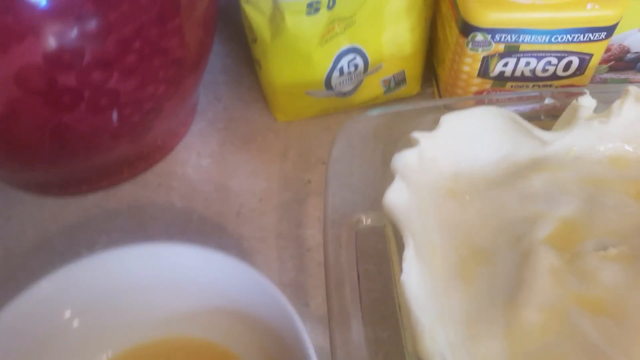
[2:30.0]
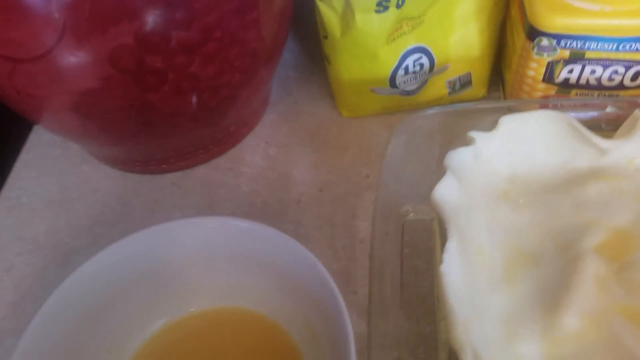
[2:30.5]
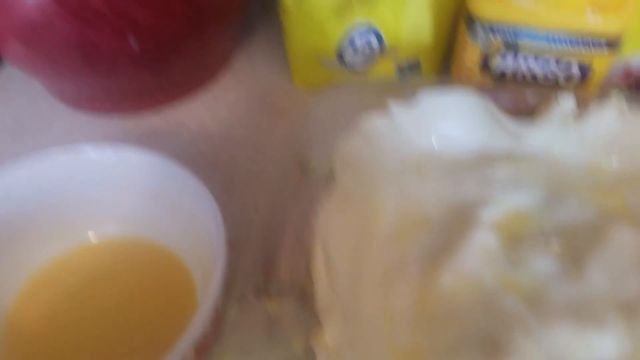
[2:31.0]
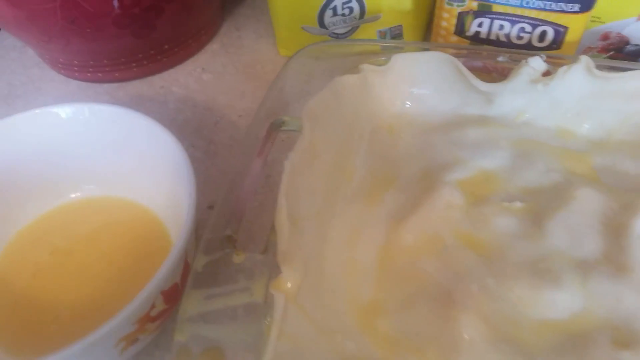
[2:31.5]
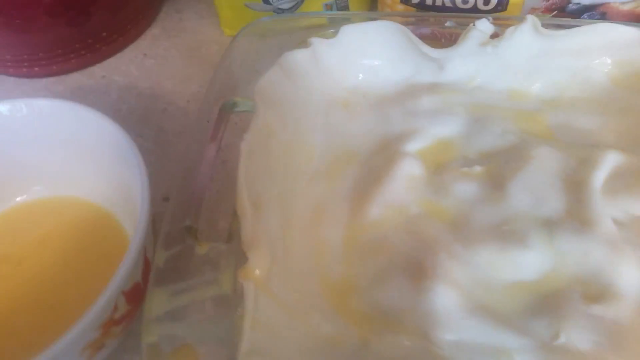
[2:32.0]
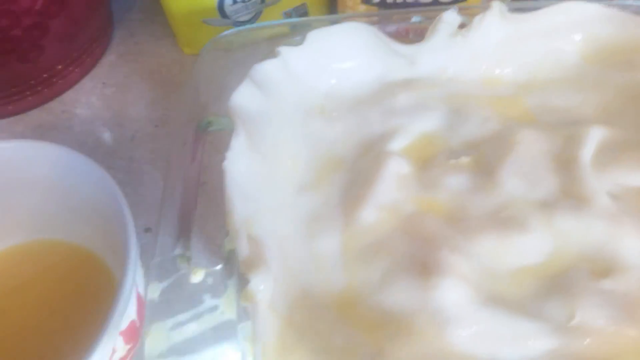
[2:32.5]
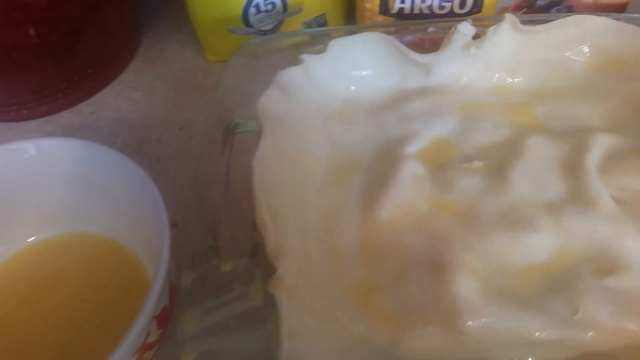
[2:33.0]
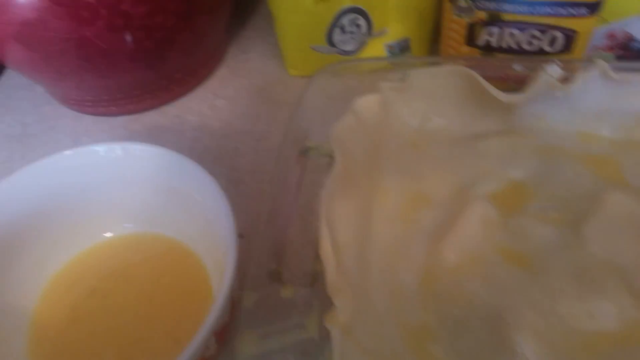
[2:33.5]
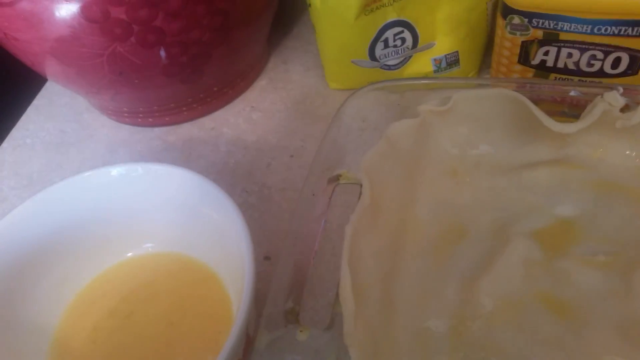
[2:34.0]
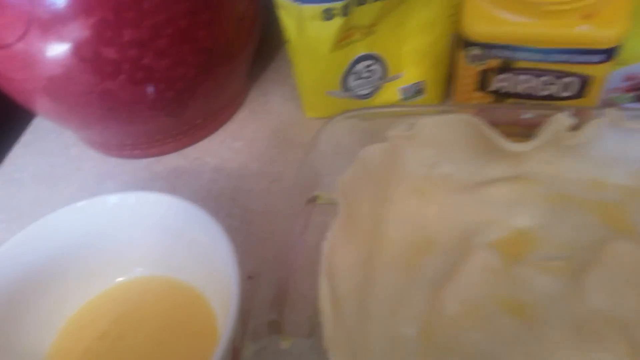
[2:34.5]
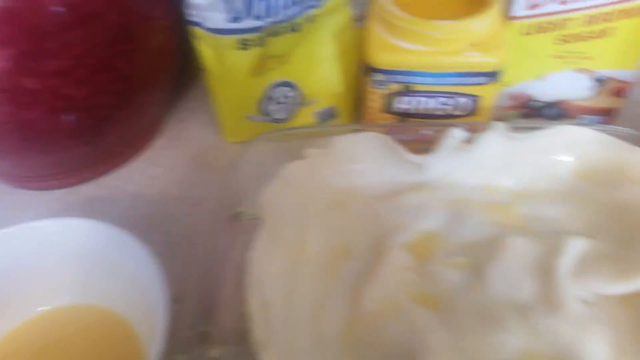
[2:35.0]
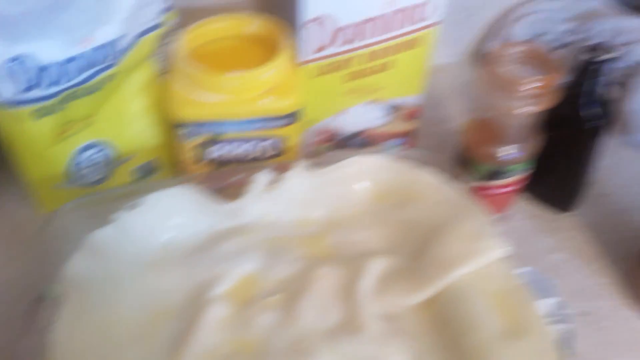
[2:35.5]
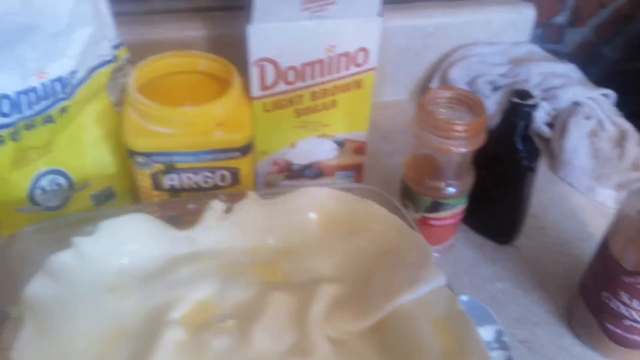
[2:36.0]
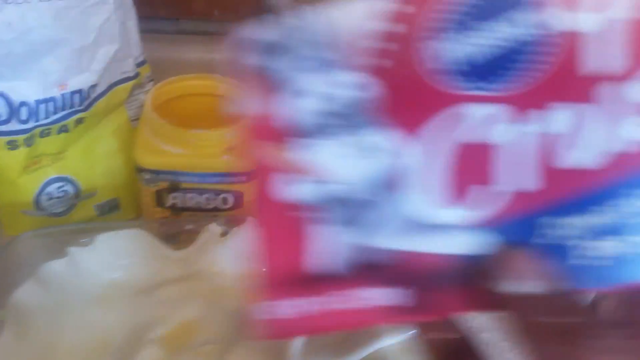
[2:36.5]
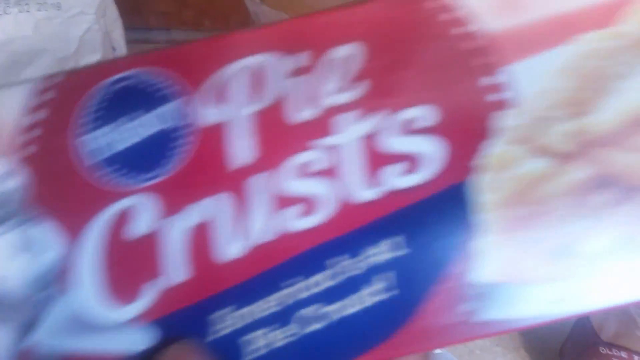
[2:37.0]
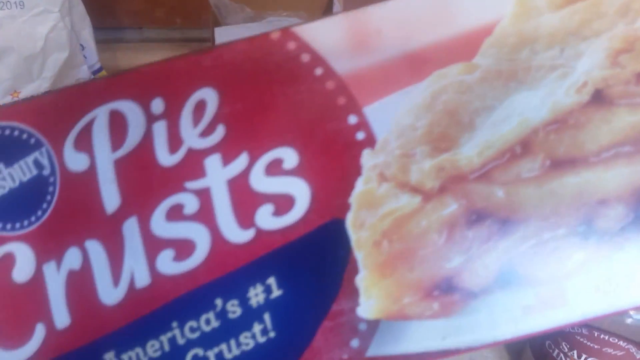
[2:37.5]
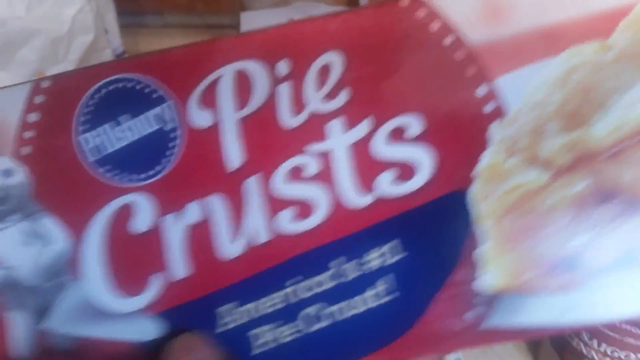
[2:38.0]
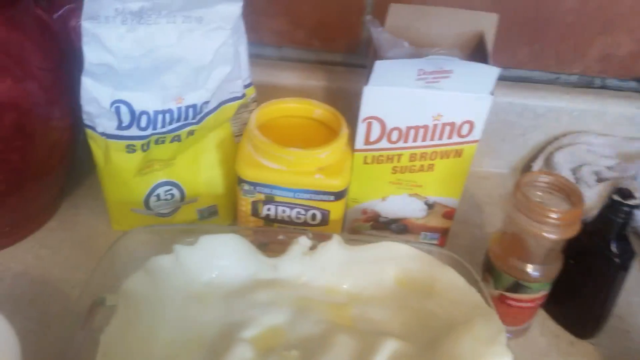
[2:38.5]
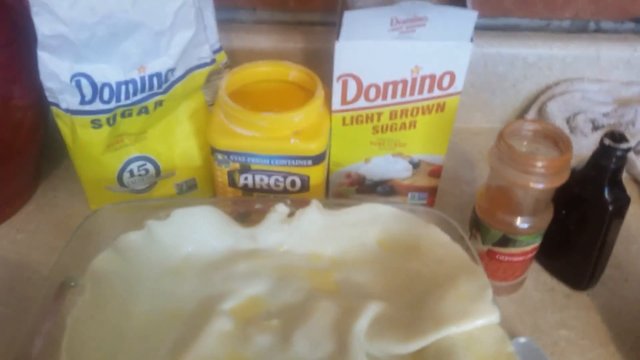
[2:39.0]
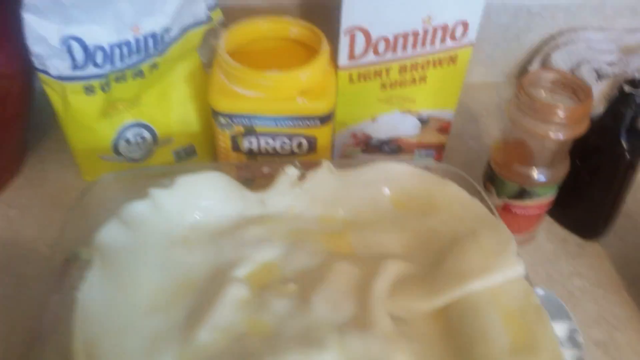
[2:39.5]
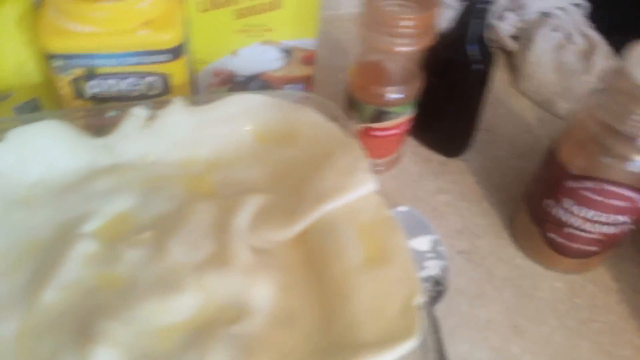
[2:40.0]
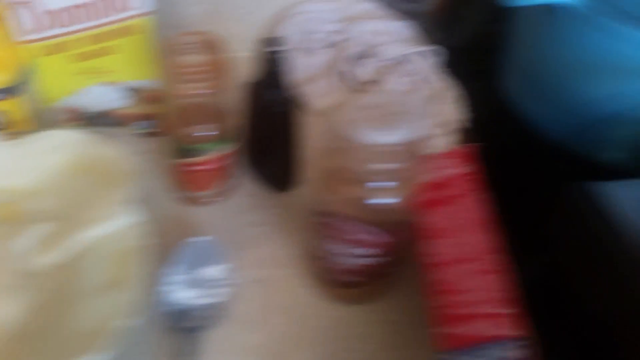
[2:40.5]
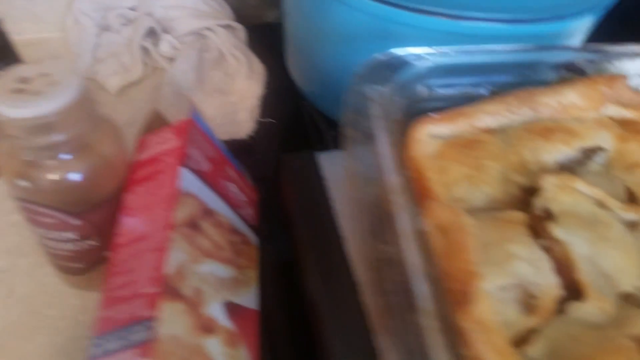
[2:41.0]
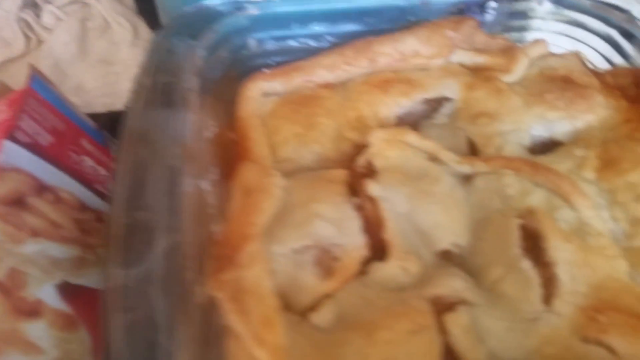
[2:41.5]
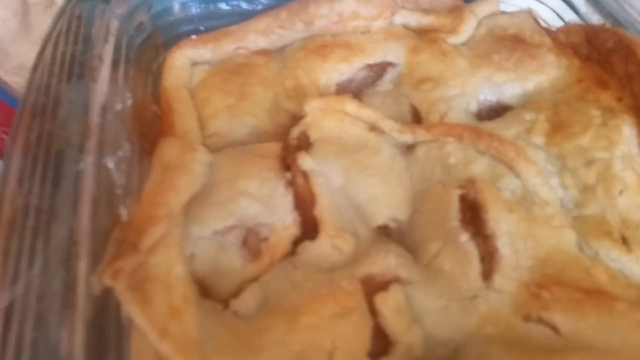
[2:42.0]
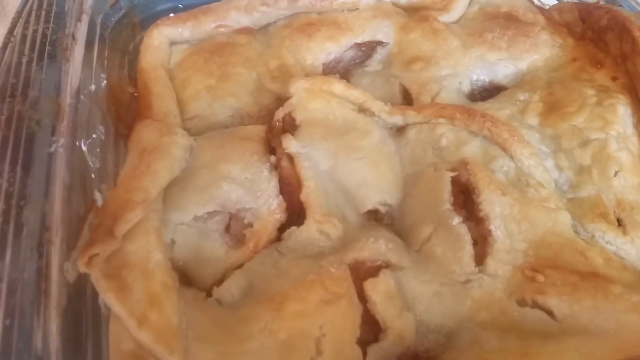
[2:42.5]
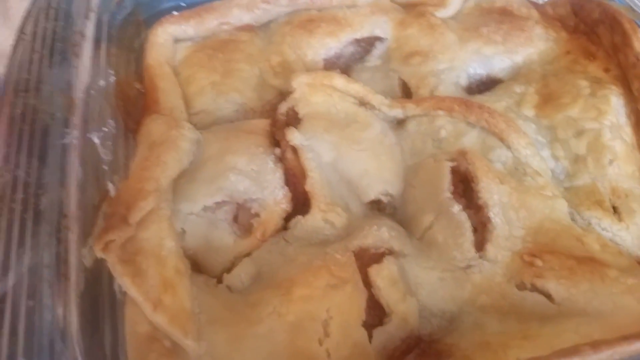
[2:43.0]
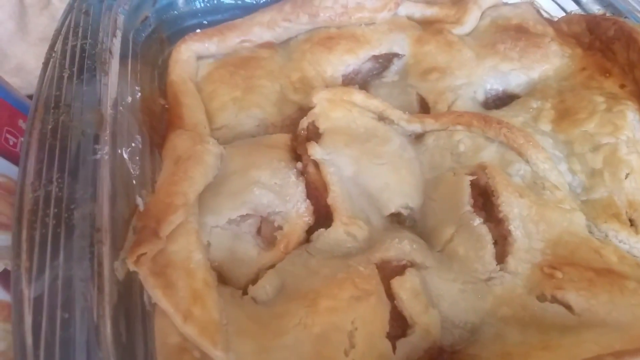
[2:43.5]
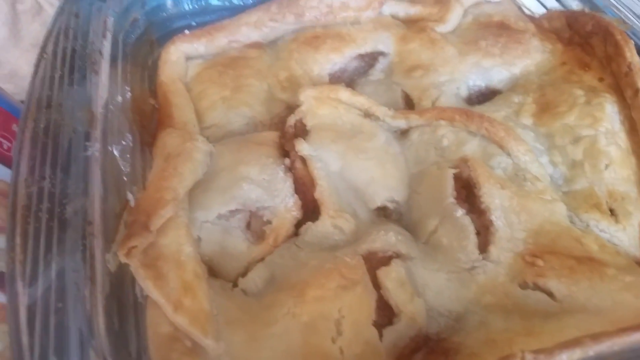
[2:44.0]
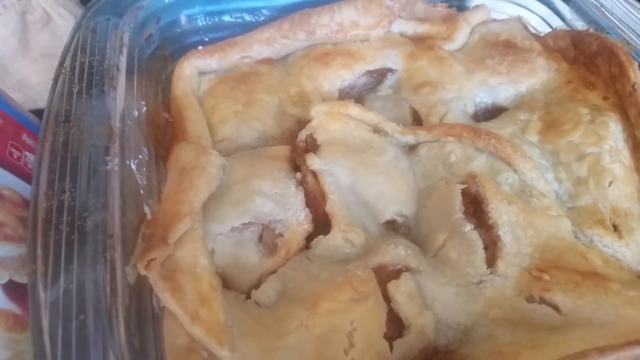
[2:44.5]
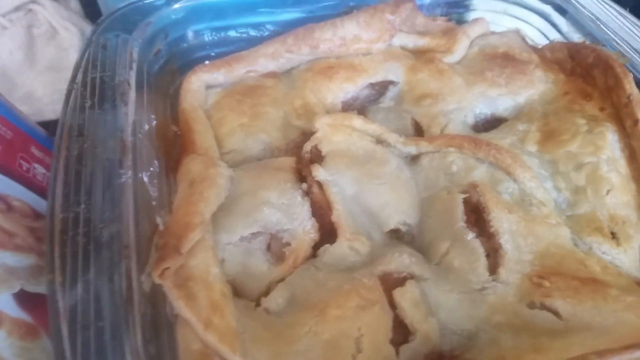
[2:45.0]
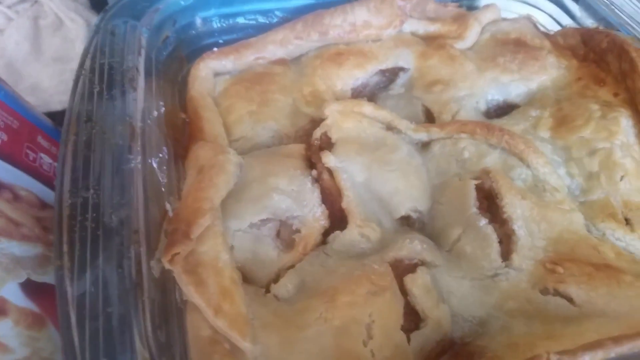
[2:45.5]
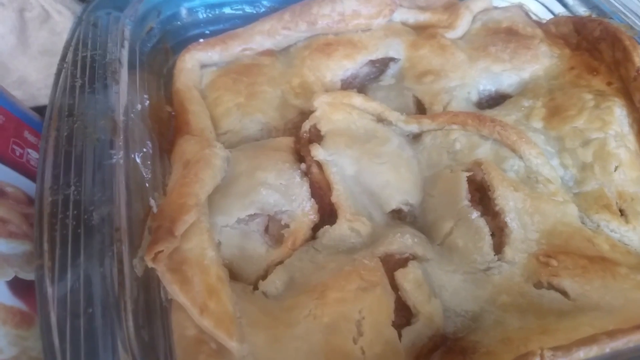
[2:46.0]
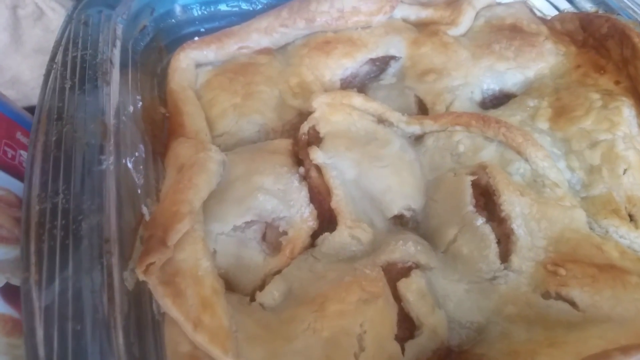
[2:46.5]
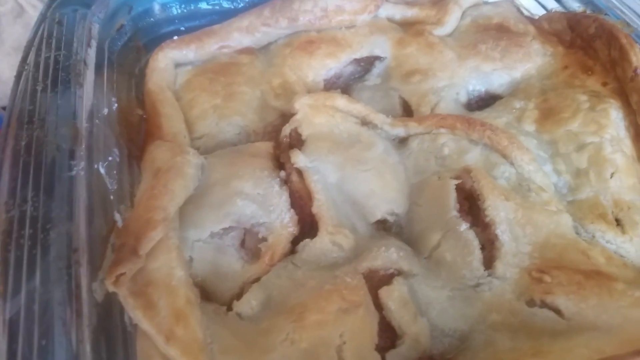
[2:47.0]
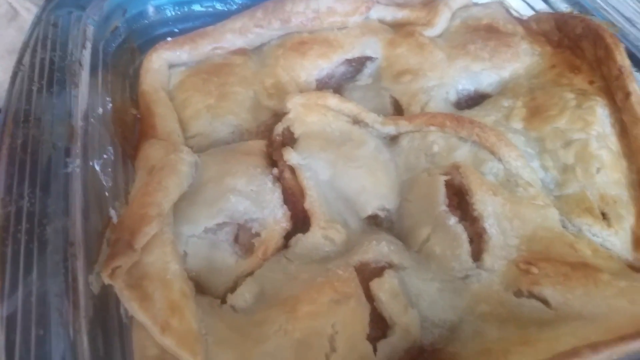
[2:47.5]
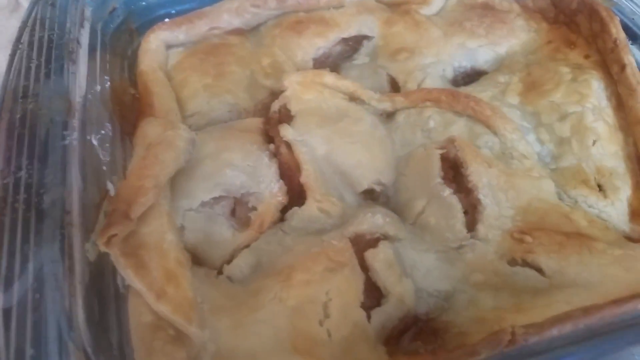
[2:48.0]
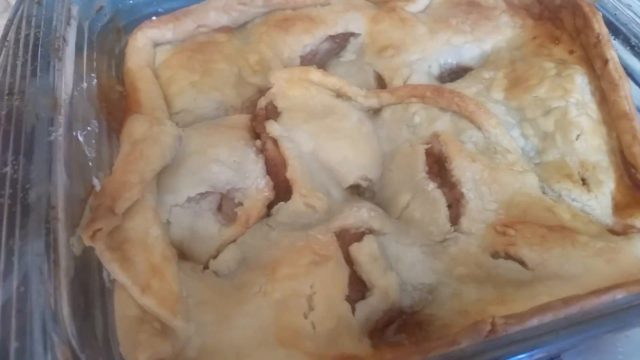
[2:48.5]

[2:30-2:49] The pie is shown with oil, or maybe egg or some sort of topping, added on top. A Pillsbury American pie crust is then shown, followed by the sugar, brown sugar, and cinnamon. The camera angle then changes to show the fully baked apple pie, which looks nicely cooked. No people or animals appear.